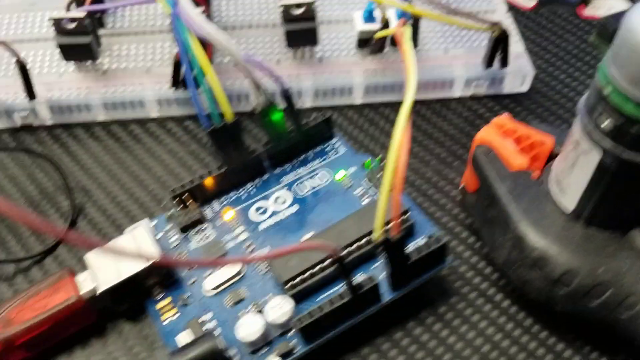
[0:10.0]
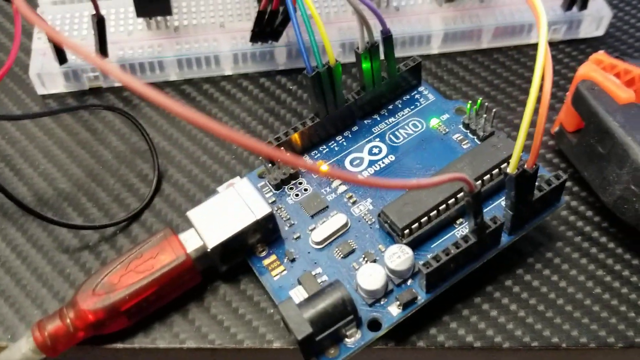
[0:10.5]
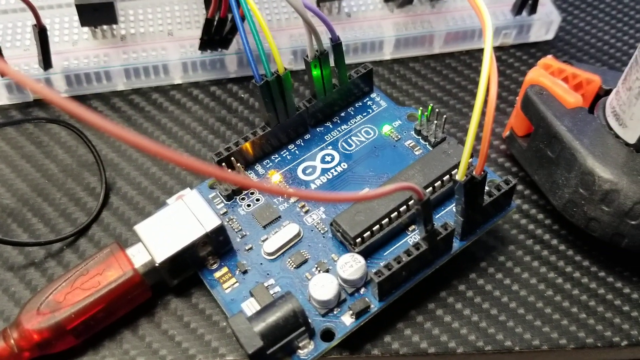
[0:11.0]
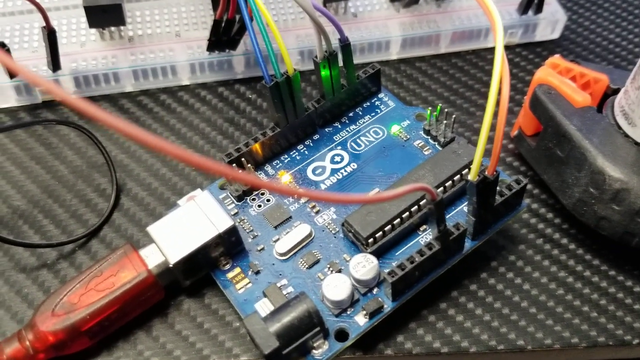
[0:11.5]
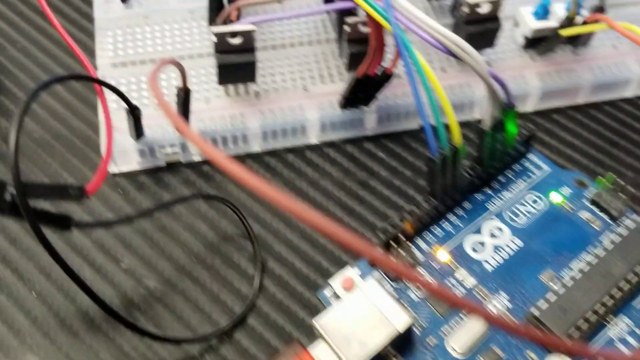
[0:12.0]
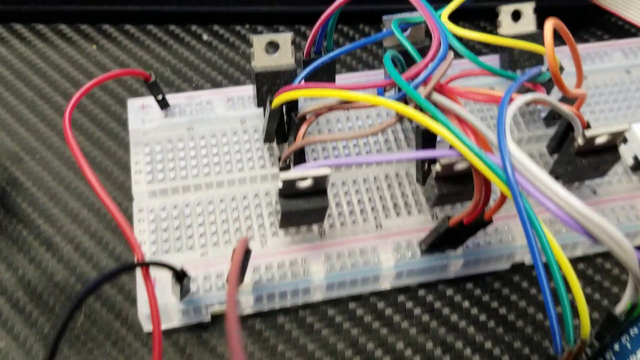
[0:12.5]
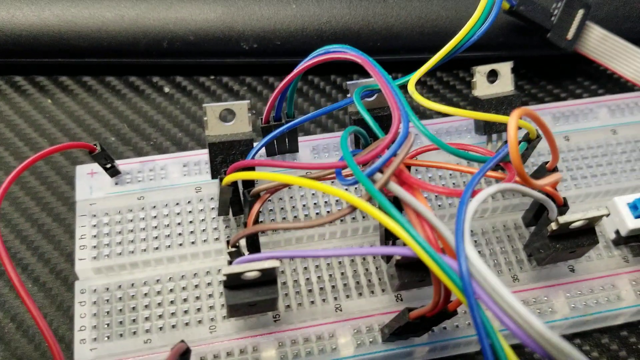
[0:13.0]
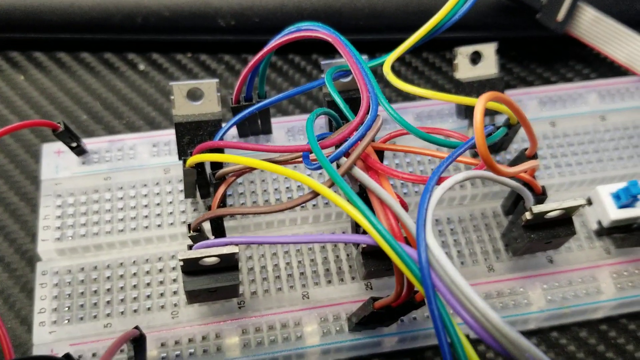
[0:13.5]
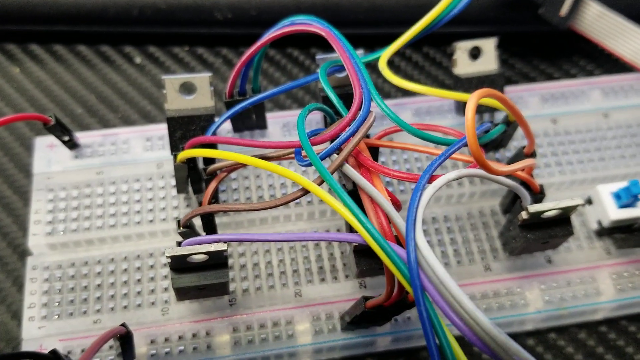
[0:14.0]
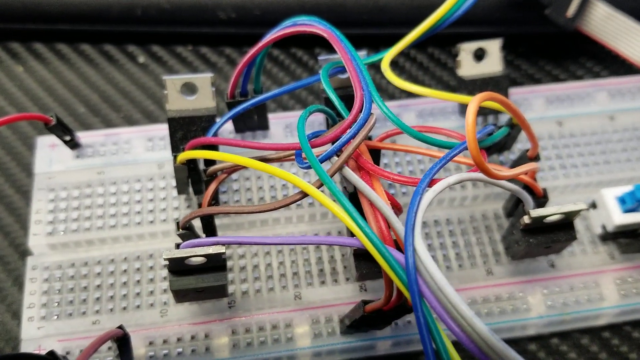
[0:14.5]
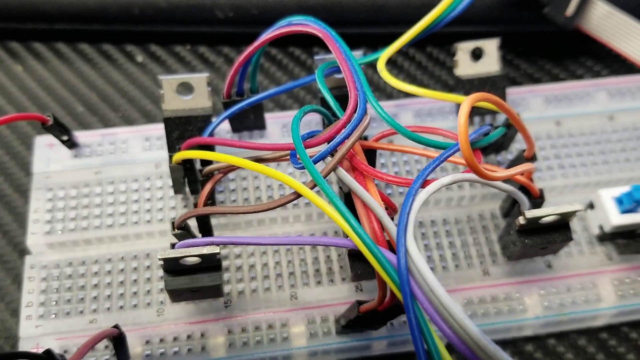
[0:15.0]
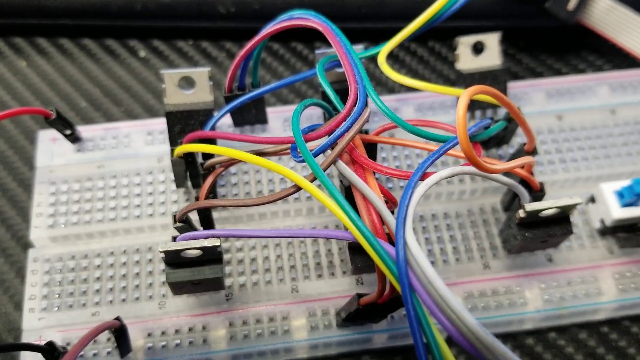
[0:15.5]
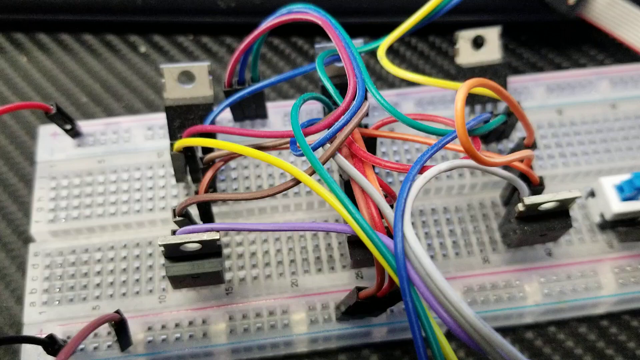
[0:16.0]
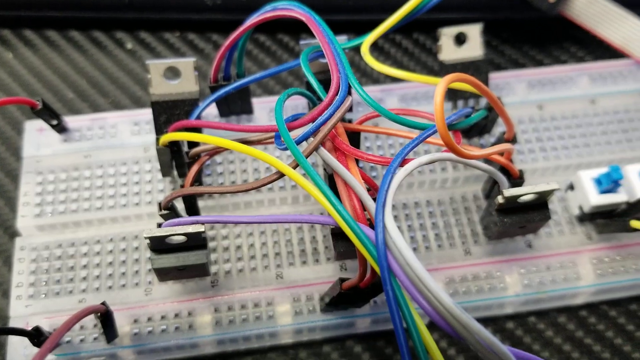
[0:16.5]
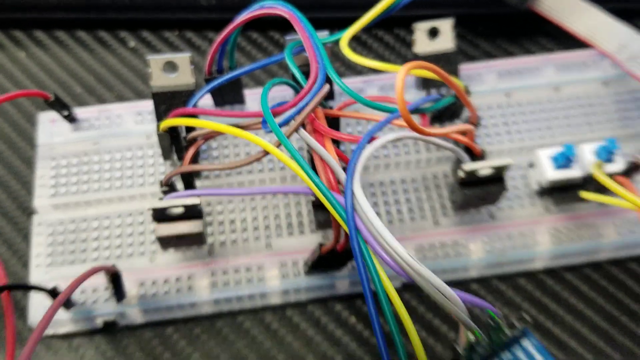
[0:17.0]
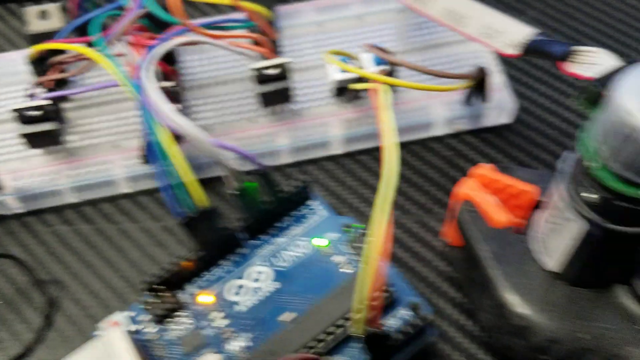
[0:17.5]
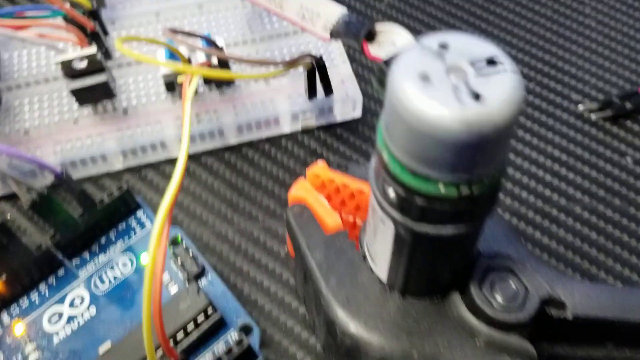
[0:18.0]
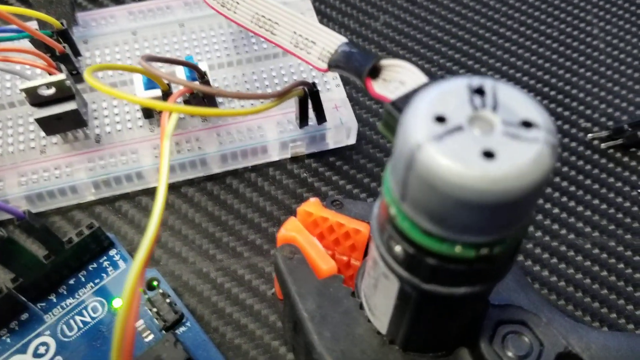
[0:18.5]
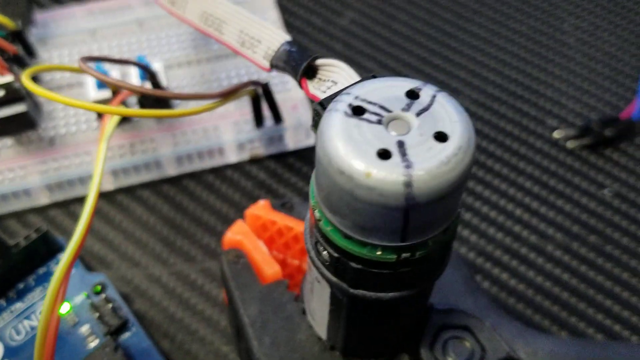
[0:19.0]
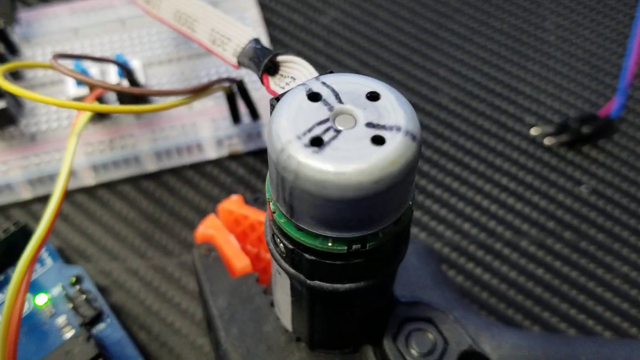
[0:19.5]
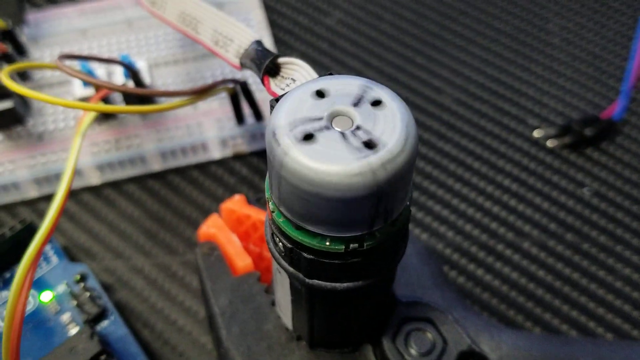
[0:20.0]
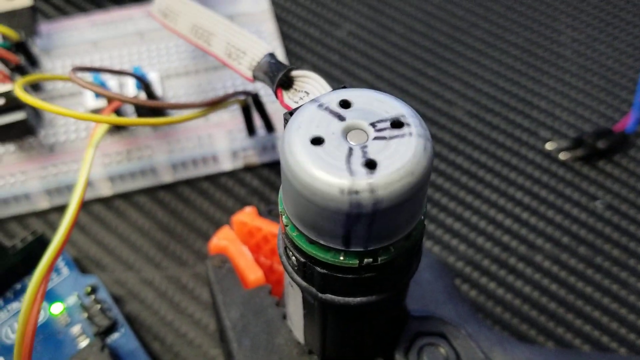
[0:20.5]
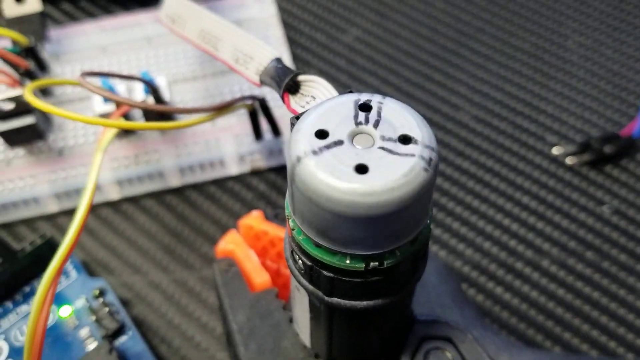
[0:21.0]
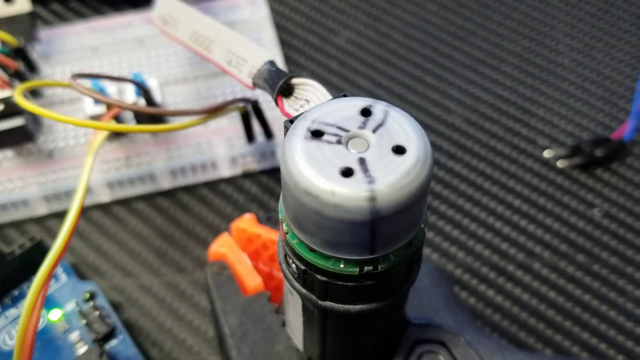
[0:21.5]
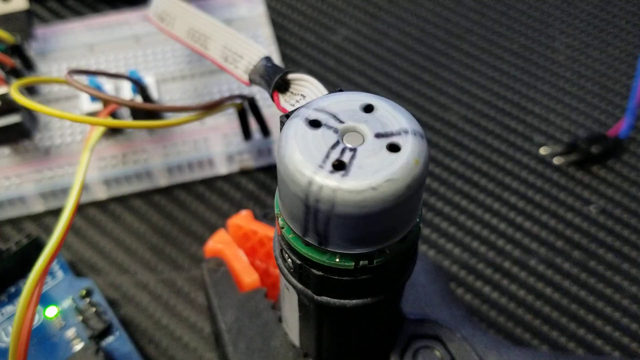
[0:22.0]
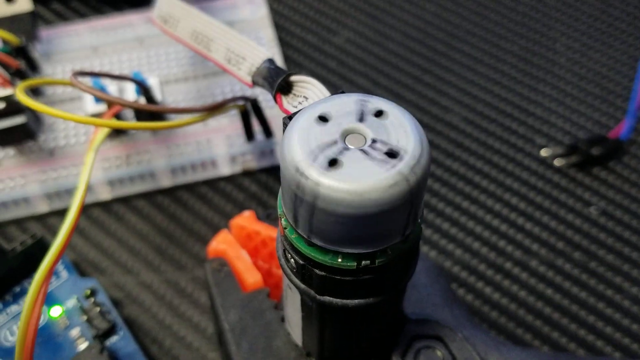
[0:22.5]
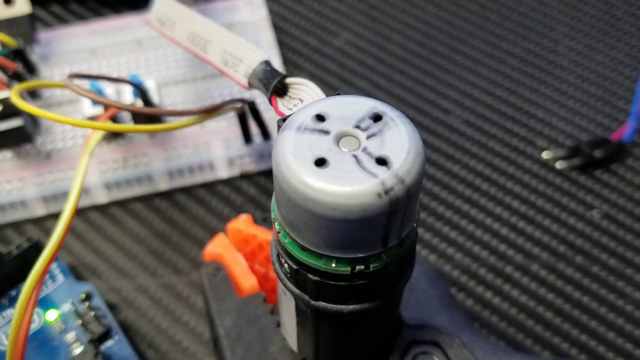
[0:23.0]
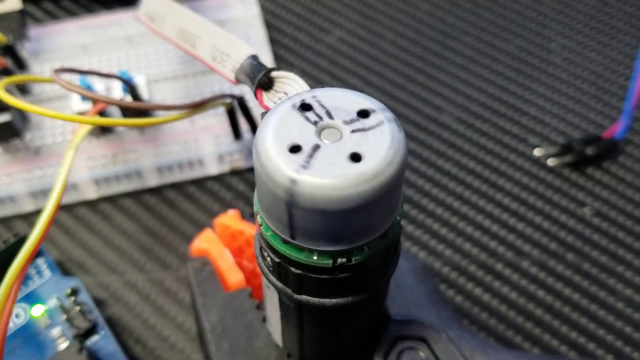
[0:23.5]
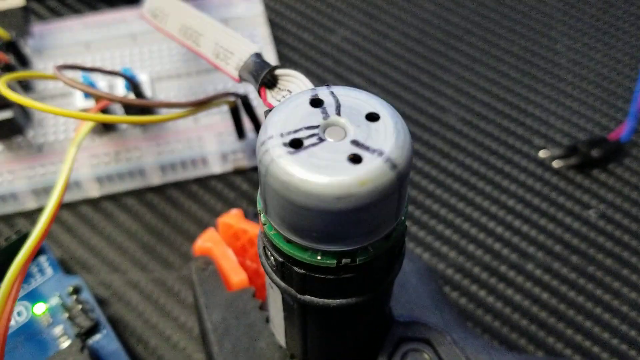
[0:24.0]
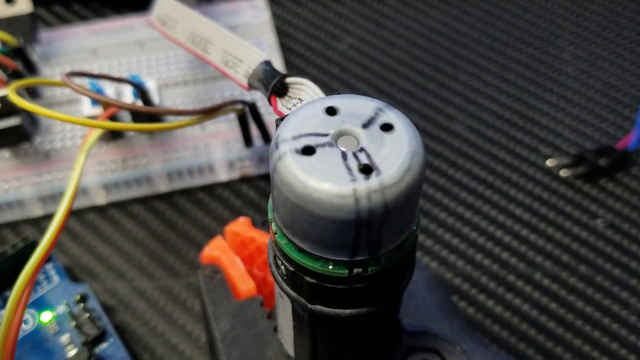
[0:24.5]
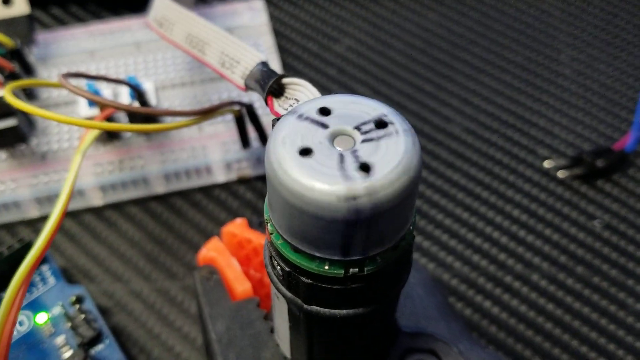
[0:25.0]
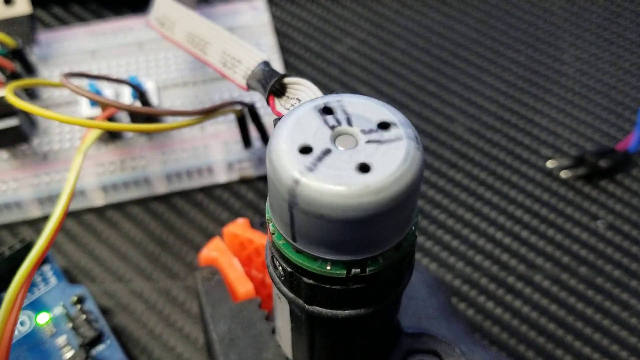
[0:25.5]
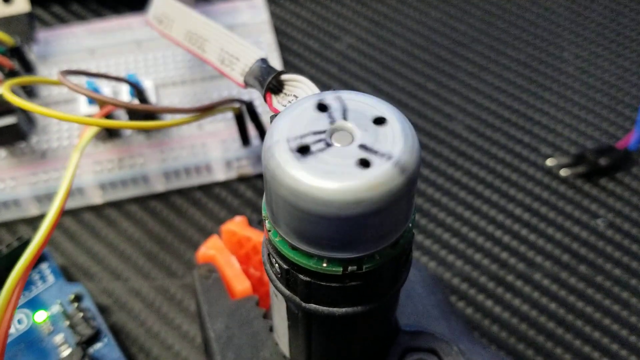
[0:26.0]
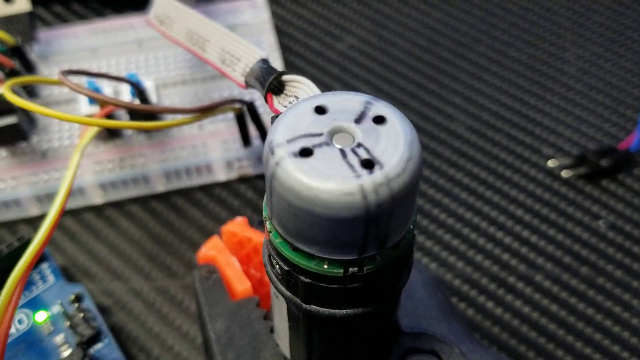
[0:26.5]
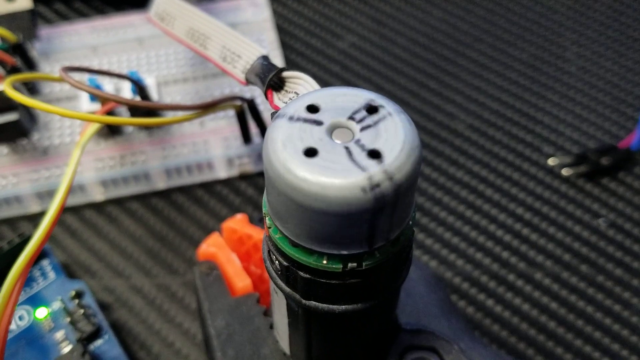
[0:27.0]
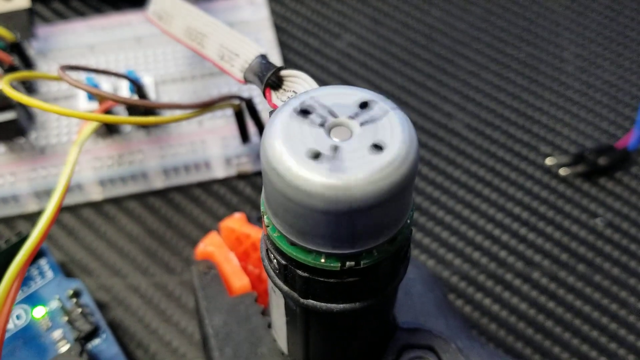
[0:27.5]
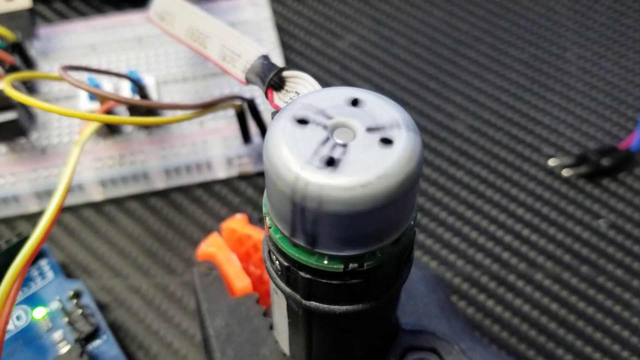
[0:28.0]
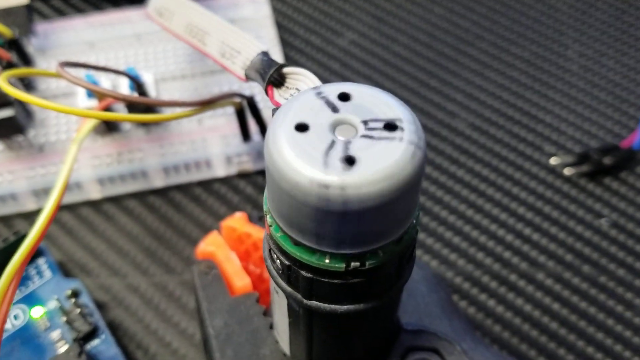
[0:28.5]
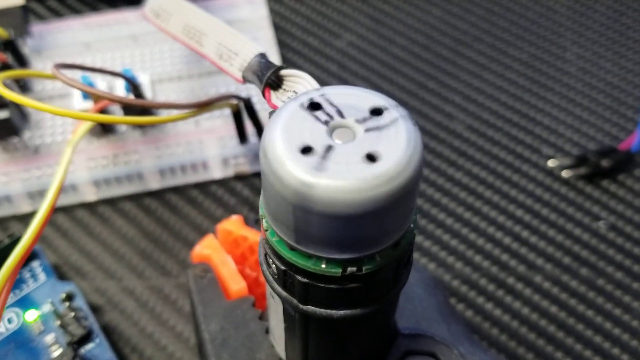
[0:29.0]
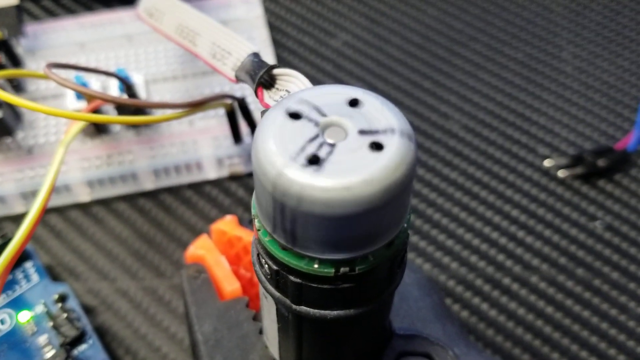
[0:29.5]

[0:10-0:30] The camera looks back at the blue circuit board, which is labeled as an Arduino Uno. The logo is visible in the middle of the blue surface of the board: an infinity sign with a minus in its left circle and a plus sign in its right circle, and next to it "Uno" written and circled inside an oval. The camera then moves up to display a white breadboard with various cables running out from it, colored red, blue, green, yellow, brown, orange, white, and purple, all running toward the various electronics on the black table. The camera then turns back to the device being propped up by black pliers with orange tips. The device is cylindrical, and its top portion is rotating counterclockwise.